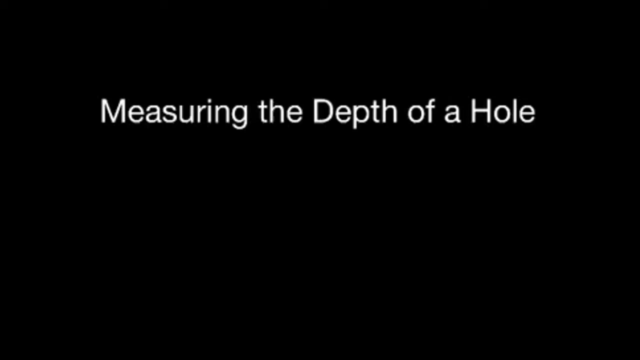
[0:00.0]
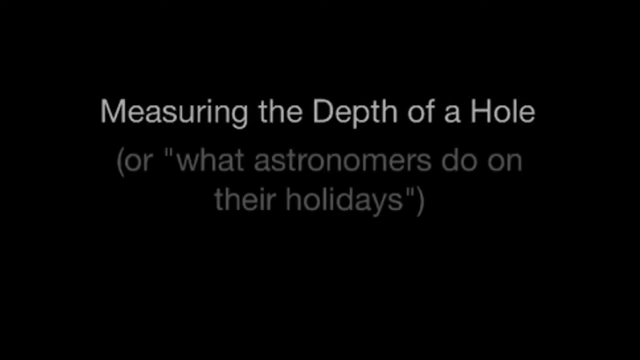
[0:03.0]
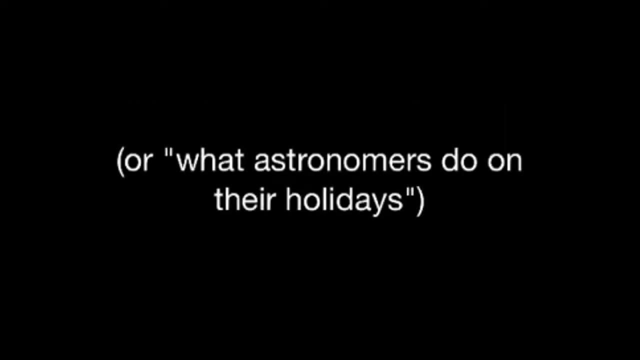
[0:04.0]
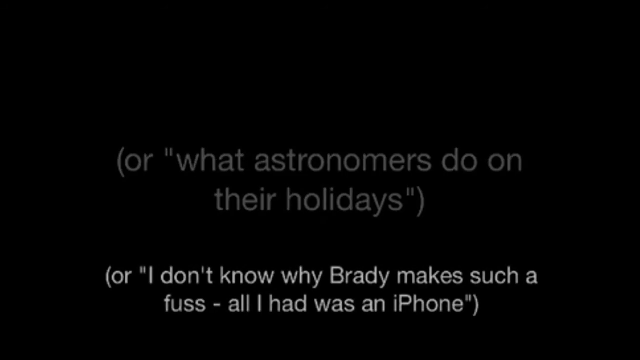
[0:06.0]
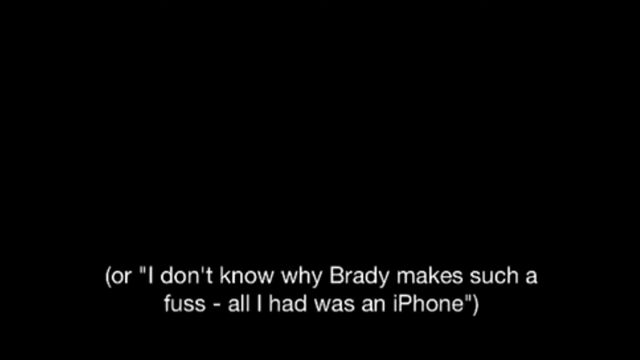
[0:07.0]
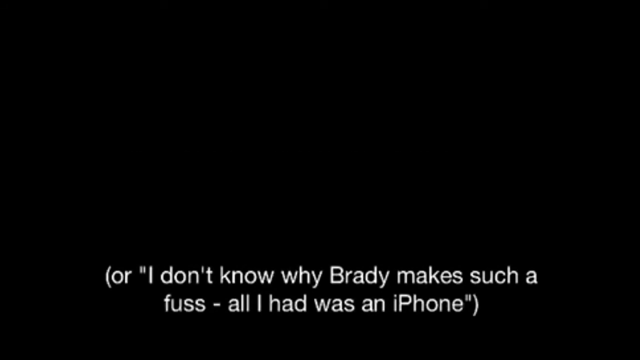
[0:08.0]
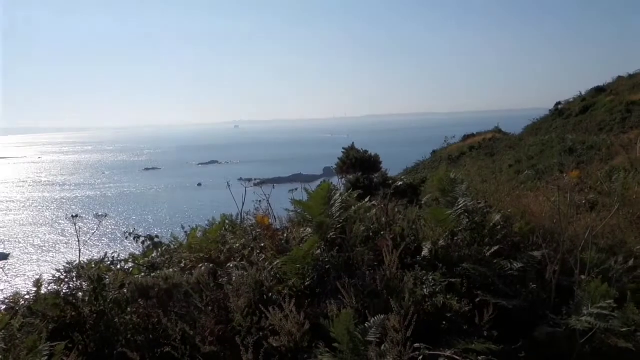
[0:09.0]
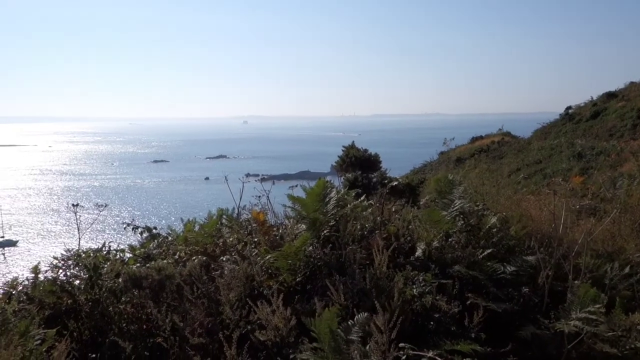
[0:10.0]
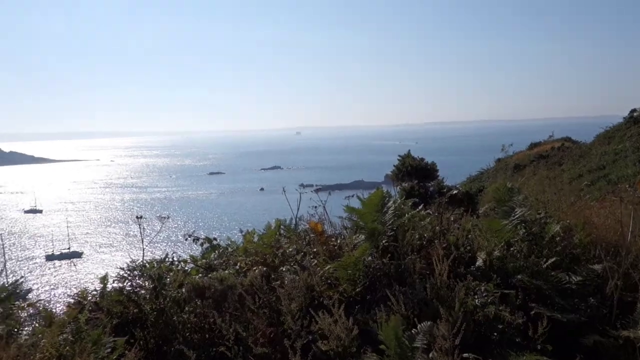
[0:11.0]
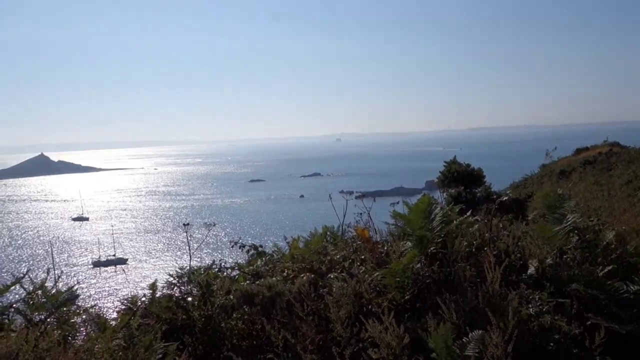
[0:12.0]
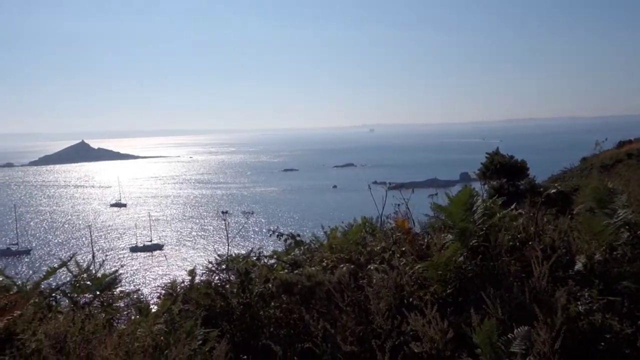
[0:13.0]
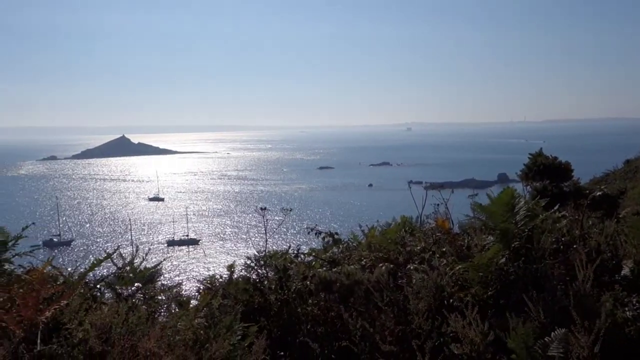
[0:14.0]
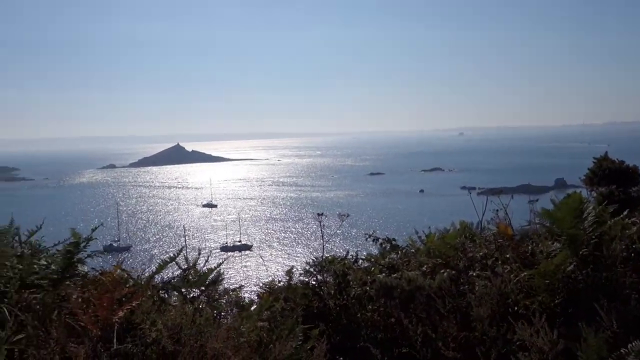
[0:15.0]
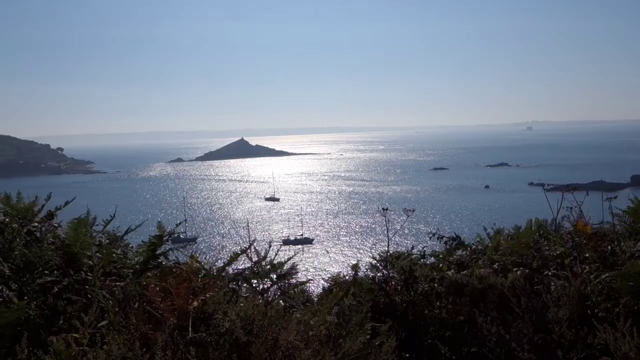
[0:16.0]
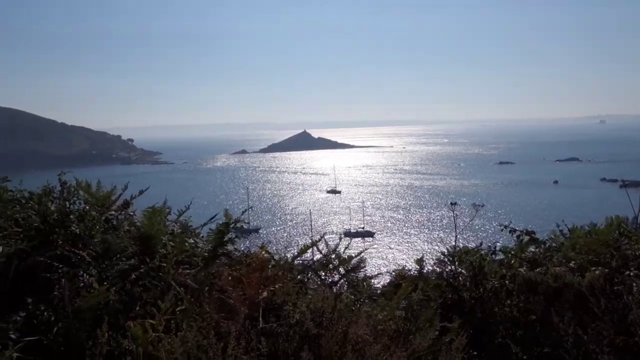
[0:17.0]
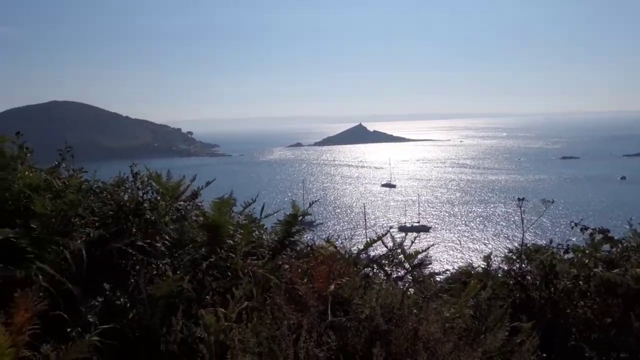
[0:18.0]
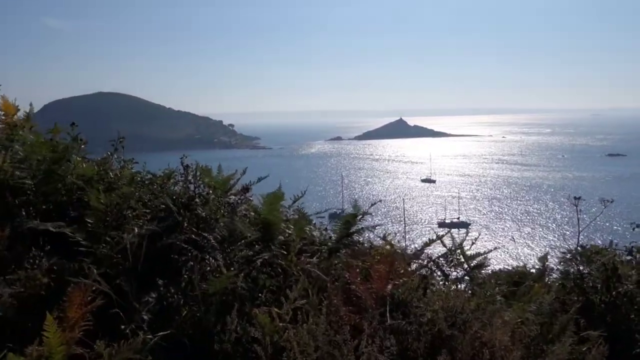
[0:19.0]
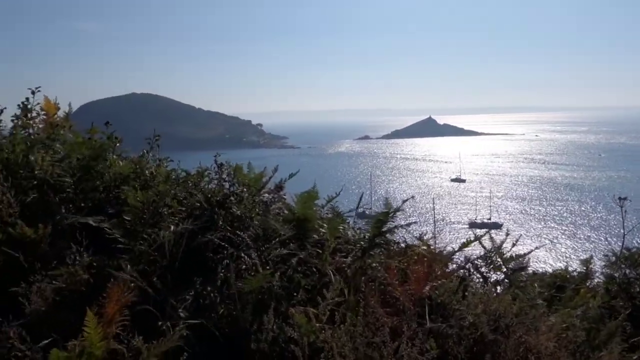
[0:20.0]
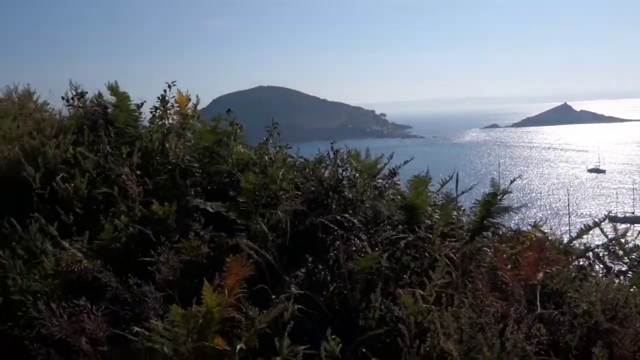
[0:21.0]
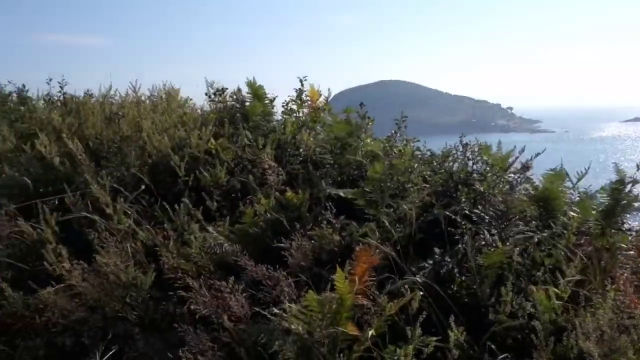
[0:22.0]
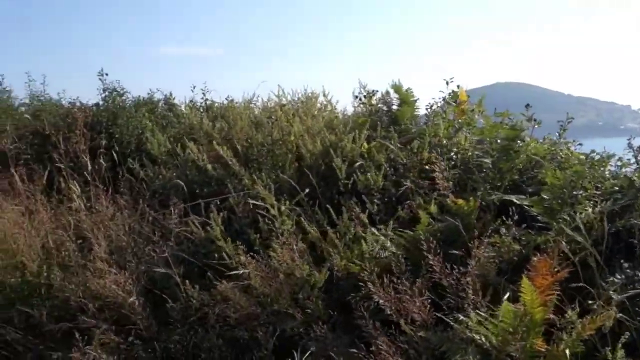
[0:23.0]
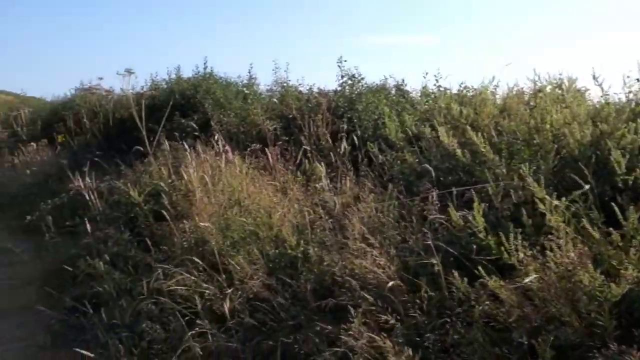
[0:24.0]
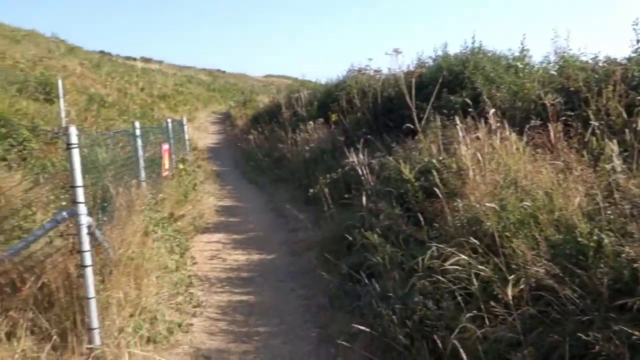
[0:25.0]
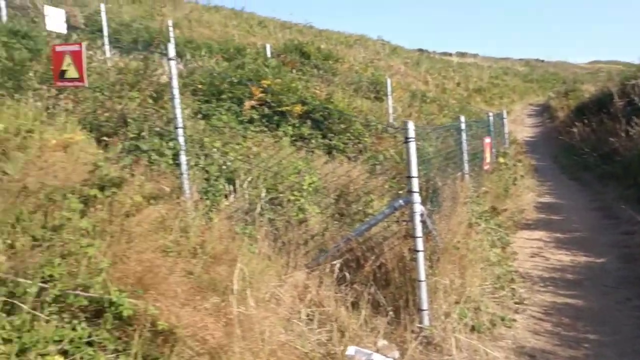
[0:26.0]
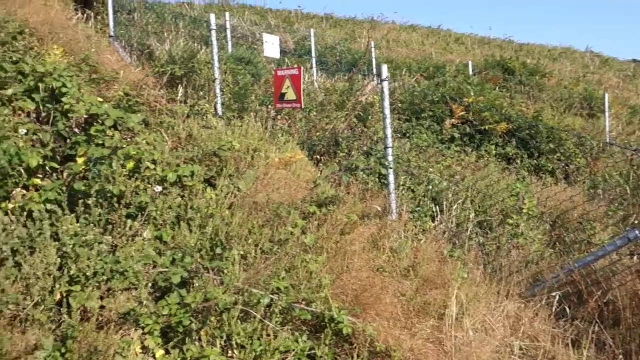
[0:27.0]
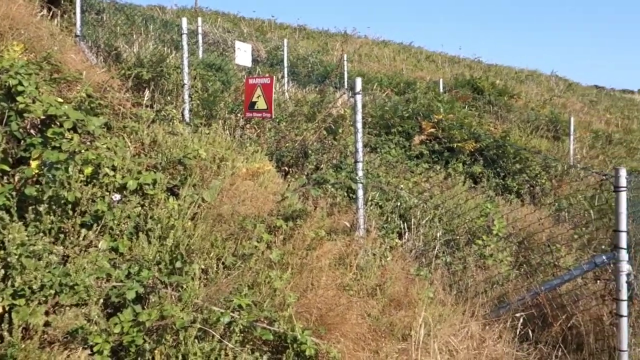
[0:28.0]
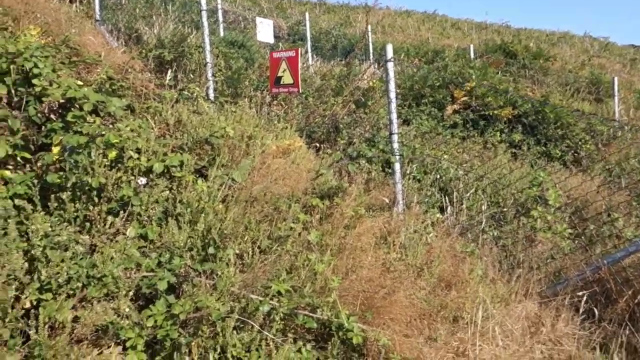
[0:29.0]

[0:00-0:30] The video begins with white writing on a black background. After a few moments the first writing disappears, giving way to a second white writing positioned in the center of the frame. That writing then disappears, giving way to a third white writing, again on a black background, positioned at the bottom of the frame. Next comes a shot of a coast: a blue sky is visible at the top, the sea at the bottom, and in the foreground vegetation is moved by the wind. In the distance there are what seem to be islands. Finally the camera turns to the left, revealing a path bordered on the left by a fence made of various metal poles and a metal net.